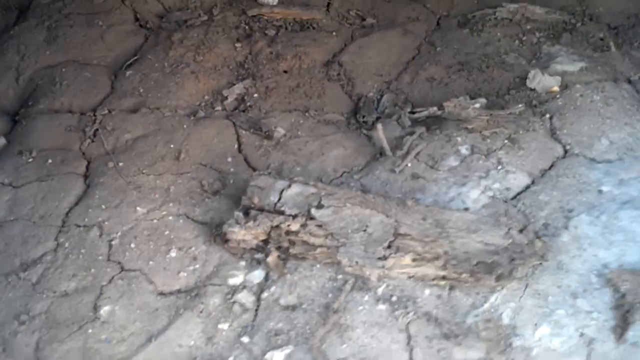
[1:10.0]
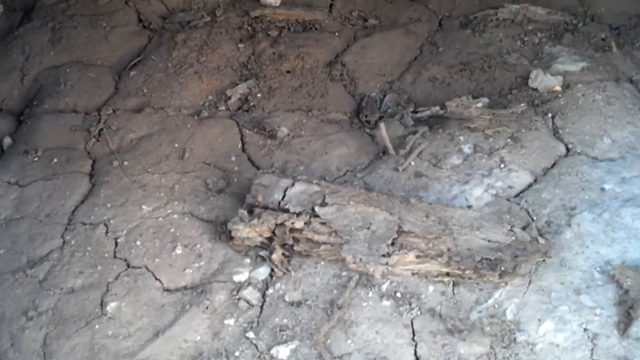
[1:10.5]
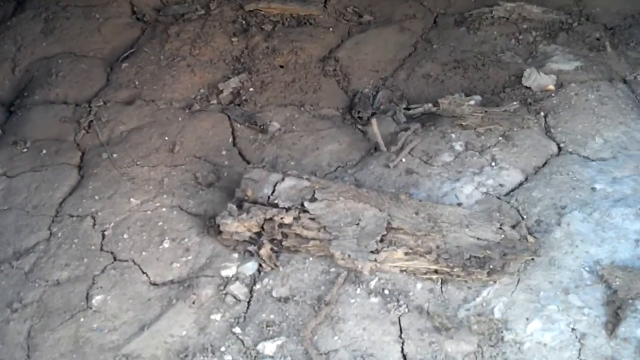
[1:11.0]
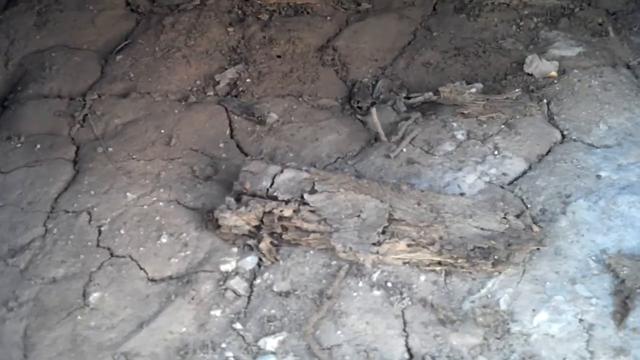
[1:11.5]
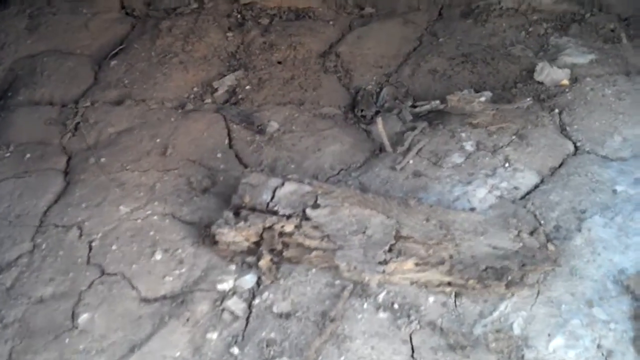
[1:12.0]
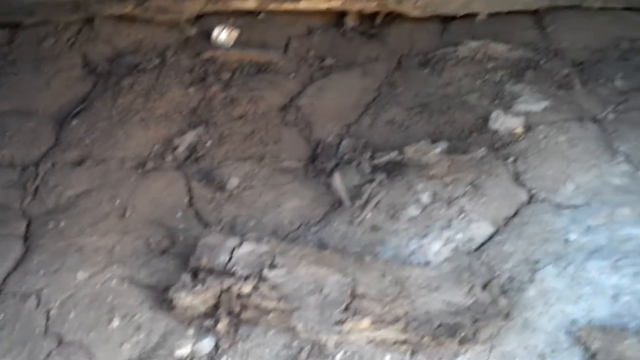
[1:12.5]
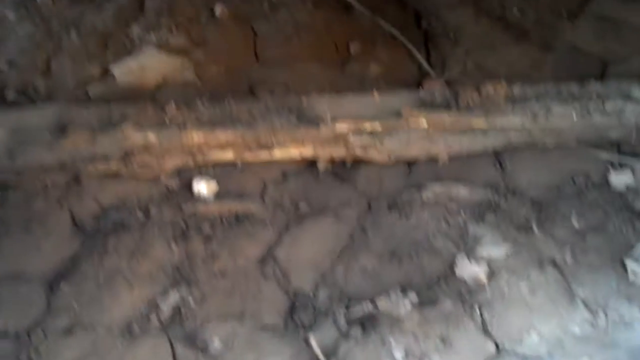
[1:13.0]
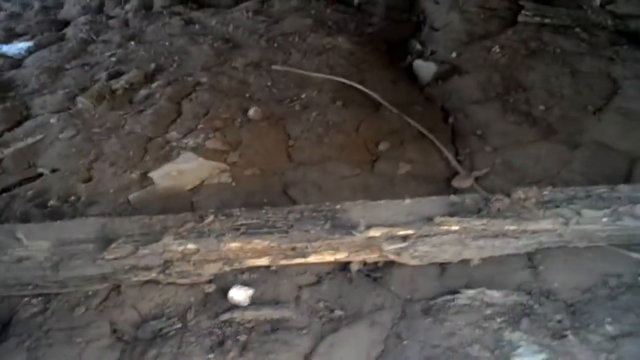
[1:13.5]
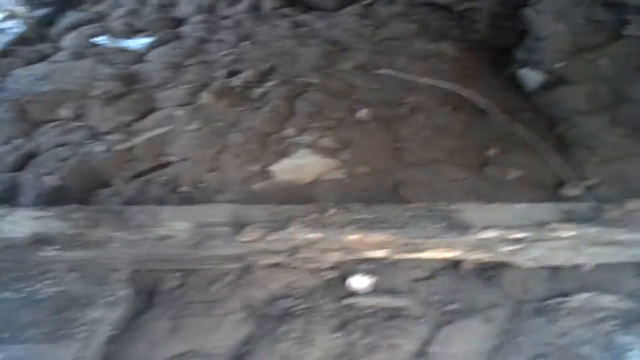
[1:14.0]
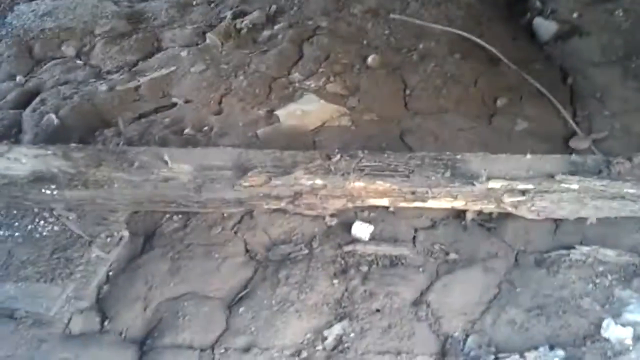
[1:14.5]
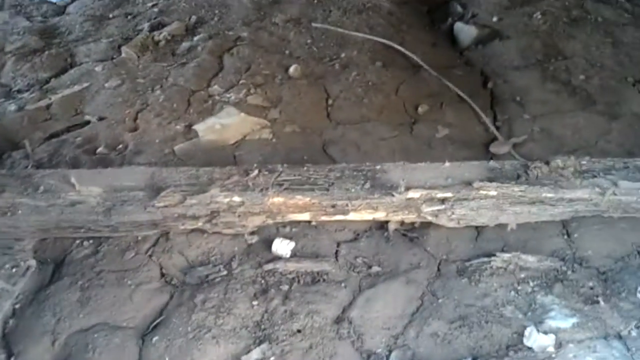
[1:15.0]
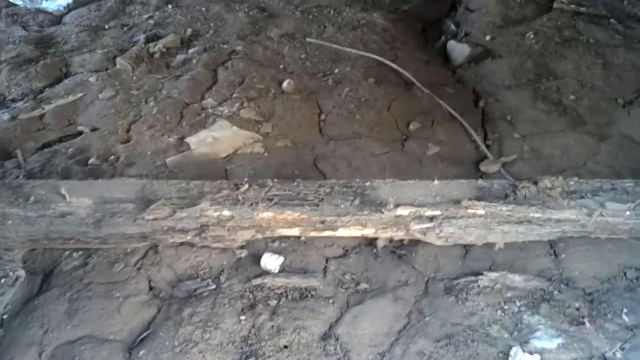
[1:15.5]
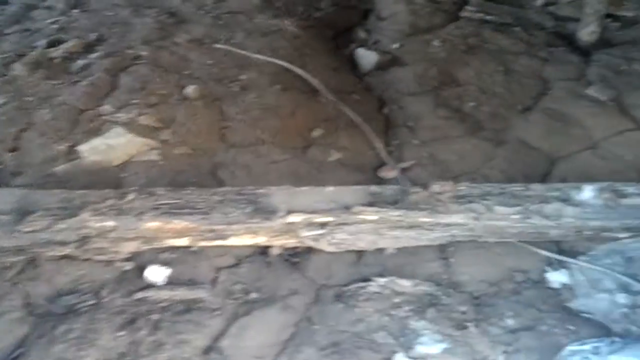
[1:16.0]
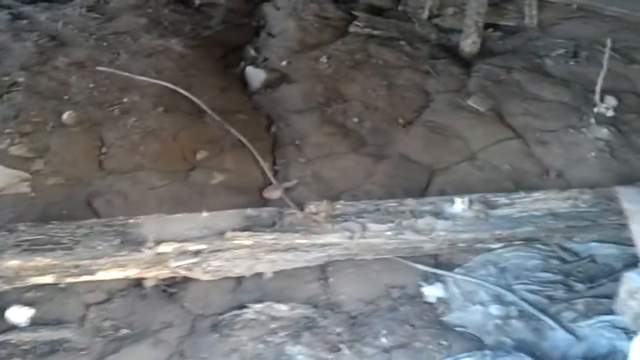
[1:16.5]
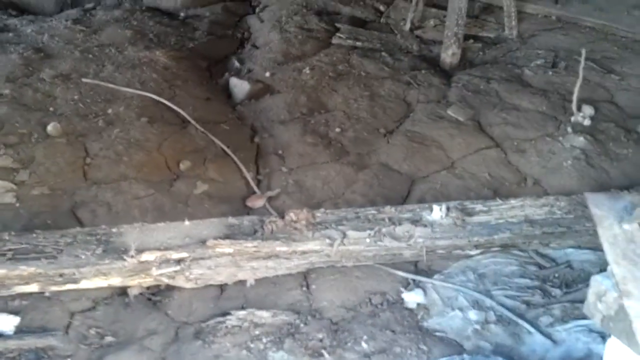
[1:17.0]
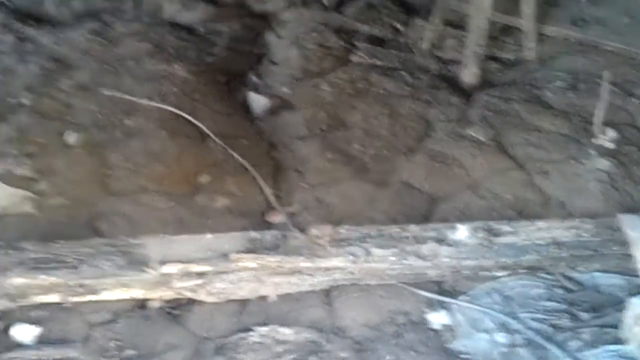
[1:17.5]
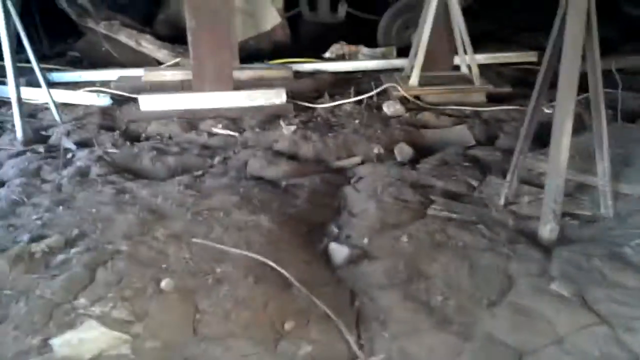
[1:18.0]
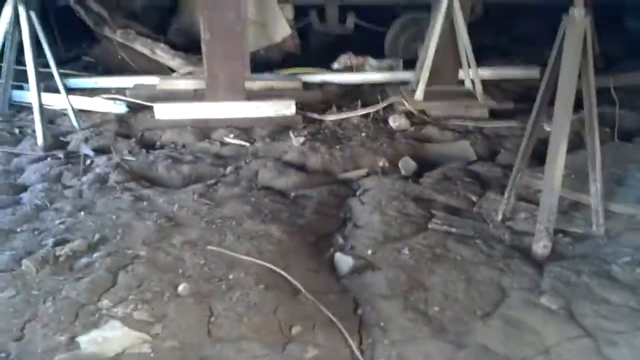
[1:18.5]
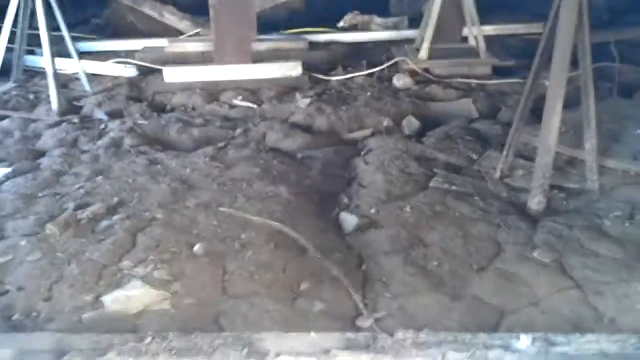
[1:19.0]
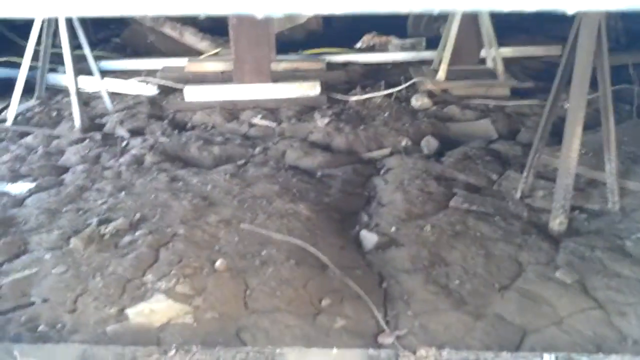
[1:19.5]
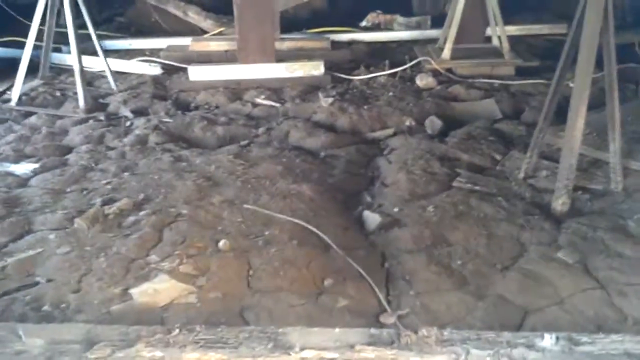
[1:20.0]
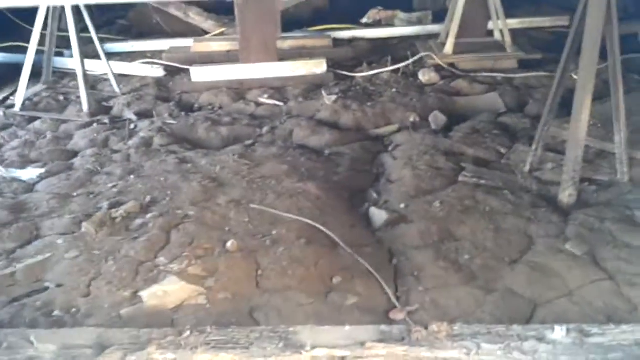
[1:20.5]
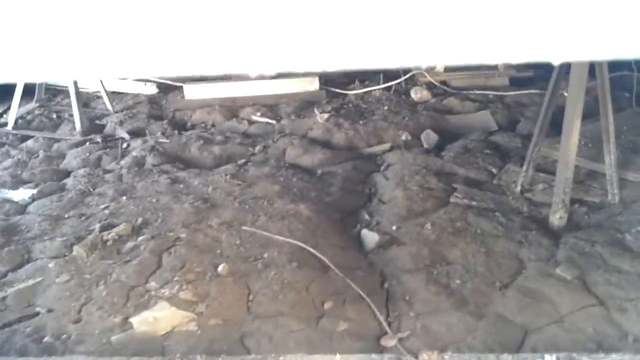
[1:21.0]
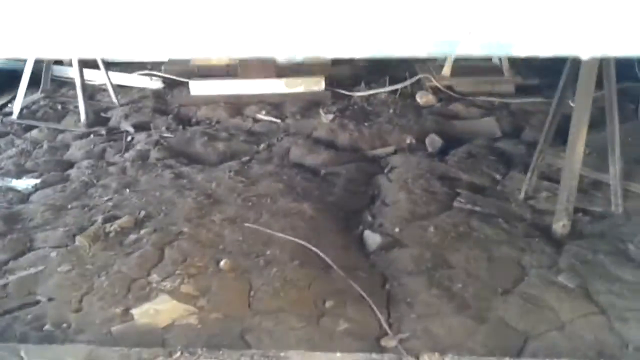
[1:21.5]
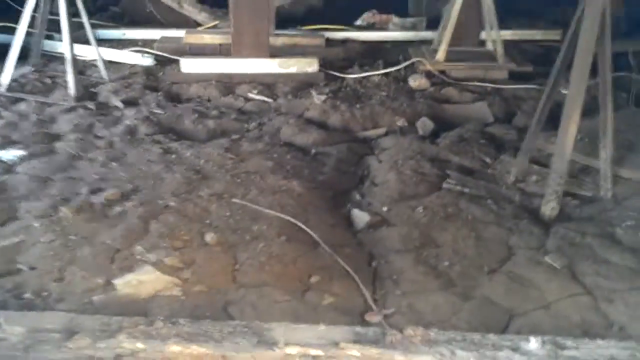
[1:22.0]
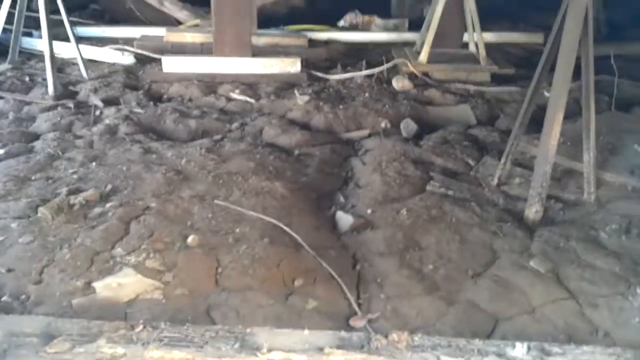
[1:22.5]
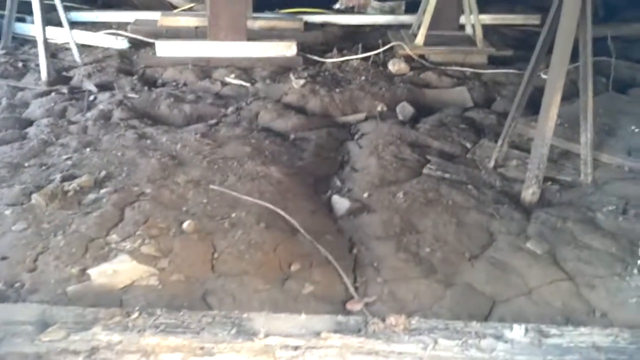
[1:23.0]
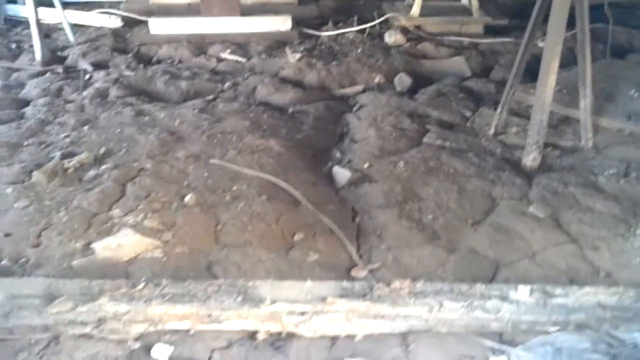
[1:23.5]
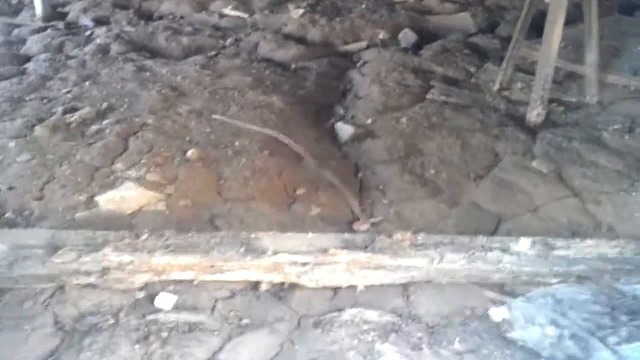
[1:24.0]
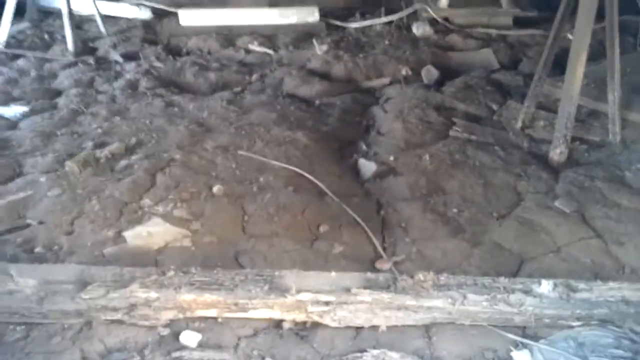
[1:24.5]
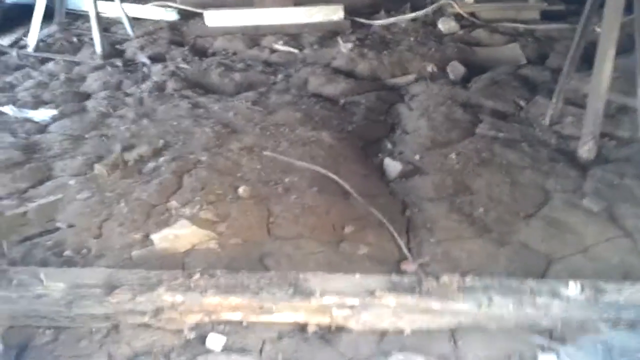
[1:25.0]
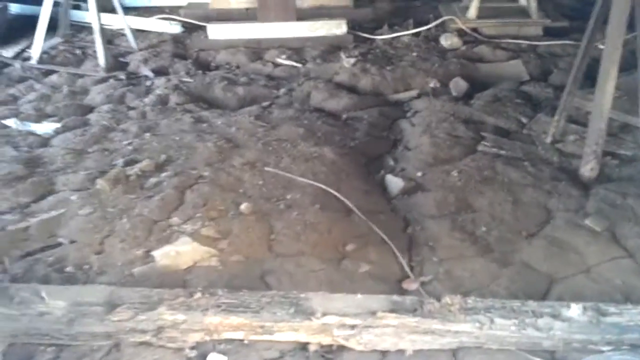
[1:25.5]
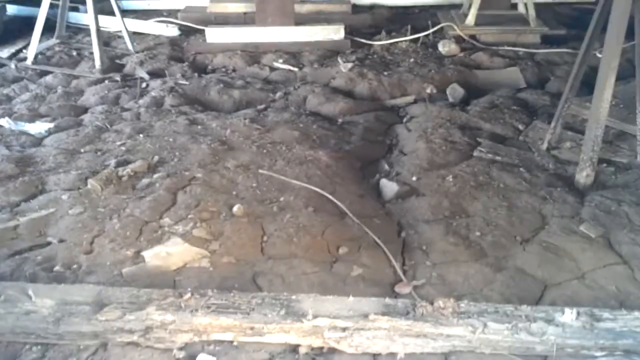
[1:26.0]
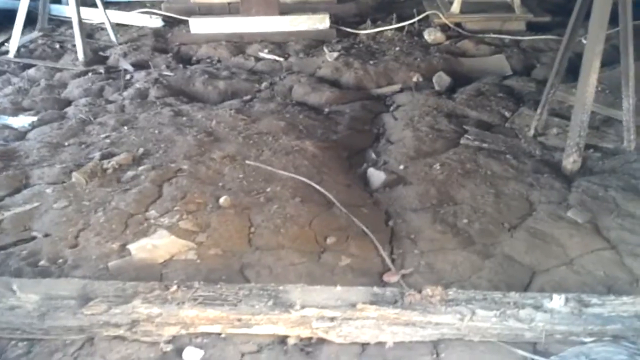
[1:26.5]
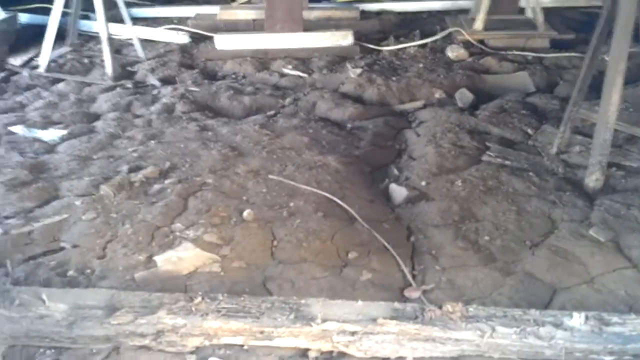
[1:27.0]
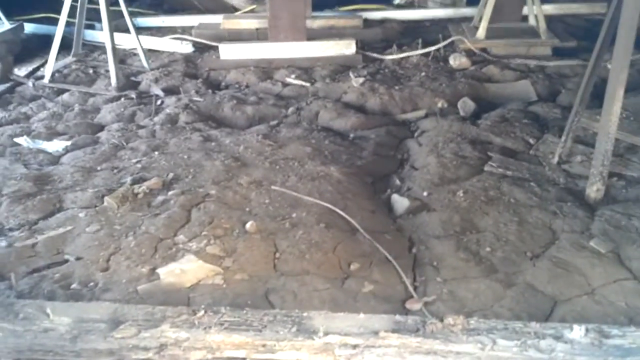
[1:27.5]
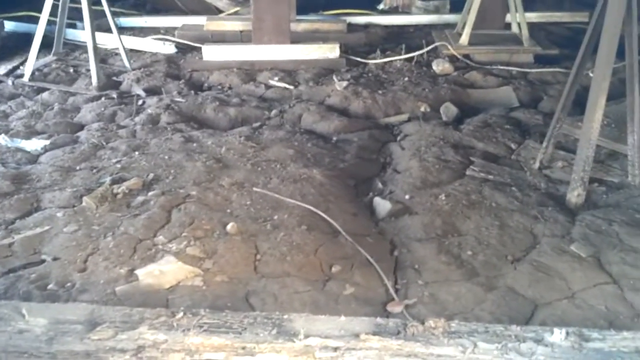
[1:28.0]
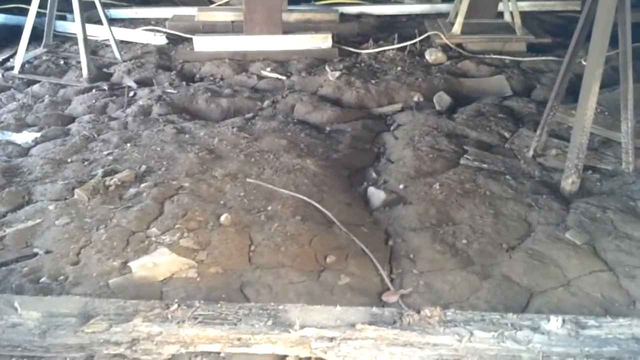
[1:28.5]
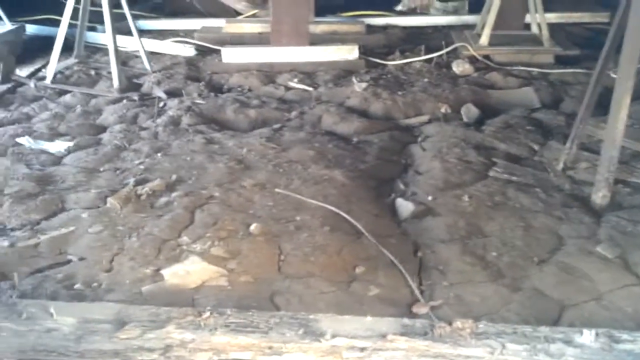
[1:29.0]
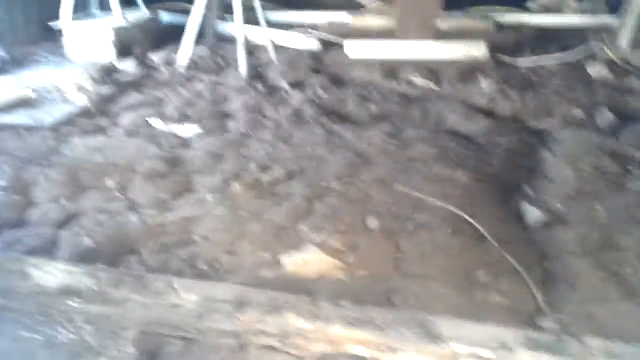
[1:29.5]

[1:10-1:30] The camera focuses on the dirt floor inside the crawl space. The dirt is cracked, and there does not appear to be any poured concrete foundation. Little metal tripods are set in random places underneath, seemingly holding up part of the porch area. A few chewed-up-looking pieces of wood are on the ground, with various debris around the tripods, and more tripods are visible in the background. The very shaky footage is mostly an extreme close-up of this second area under the porch, focused mostly on one long piece of wood that is chewed up and looks old and decayed. The home appears to be a small single home. The damage may have been done by mice or other small animals, or possibly termites.